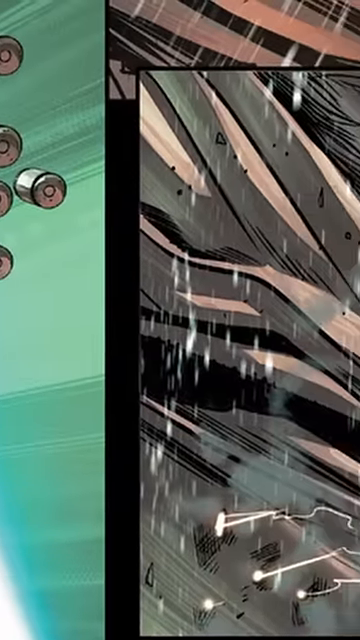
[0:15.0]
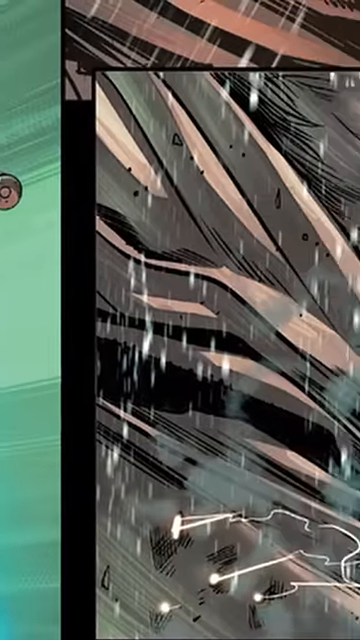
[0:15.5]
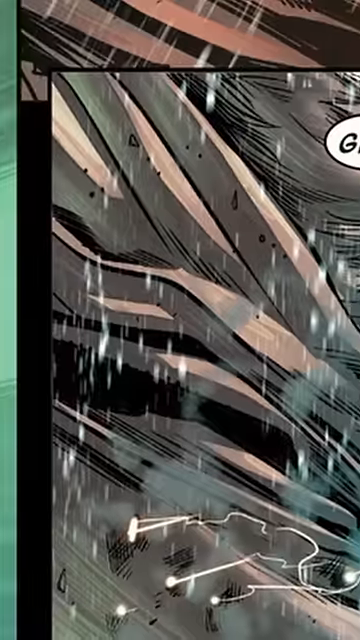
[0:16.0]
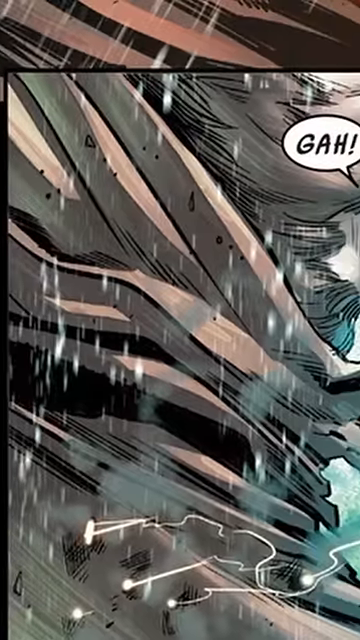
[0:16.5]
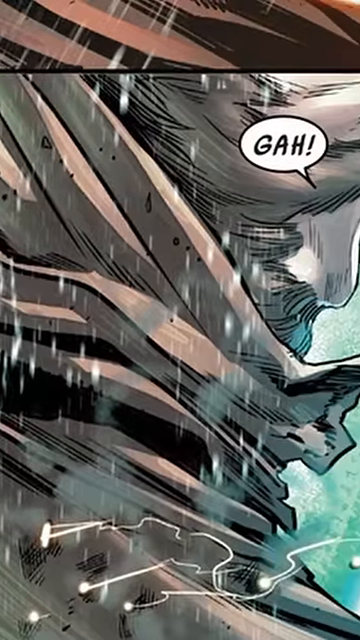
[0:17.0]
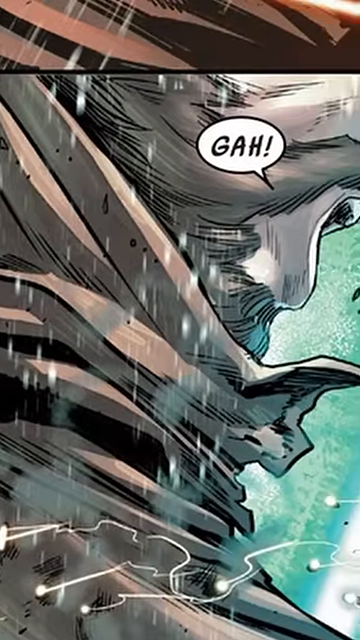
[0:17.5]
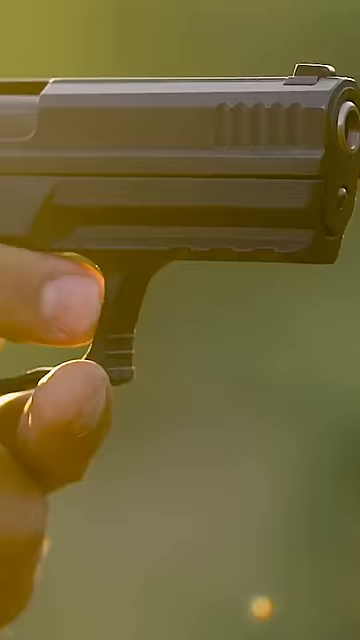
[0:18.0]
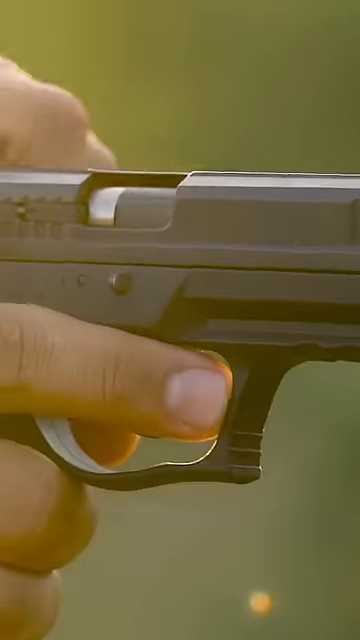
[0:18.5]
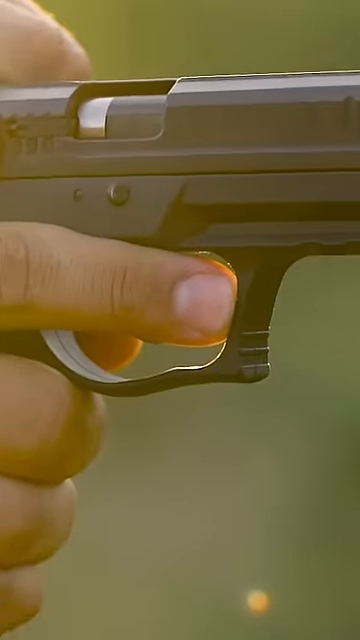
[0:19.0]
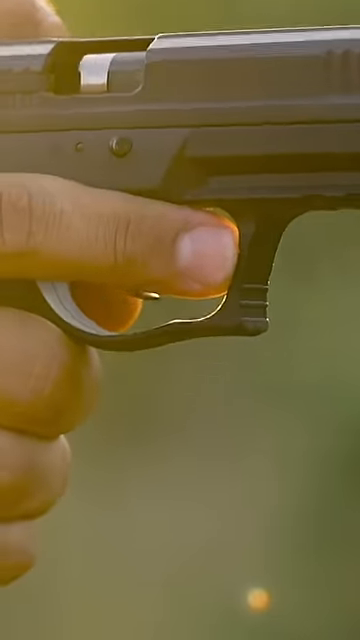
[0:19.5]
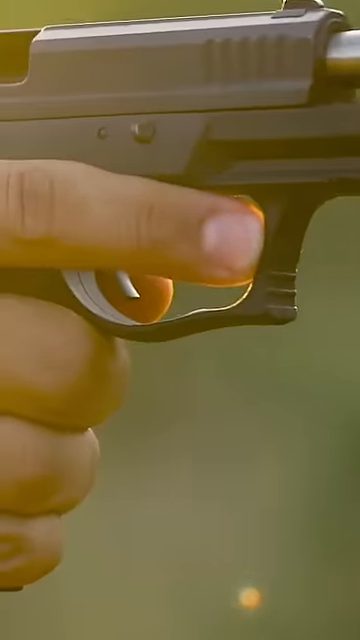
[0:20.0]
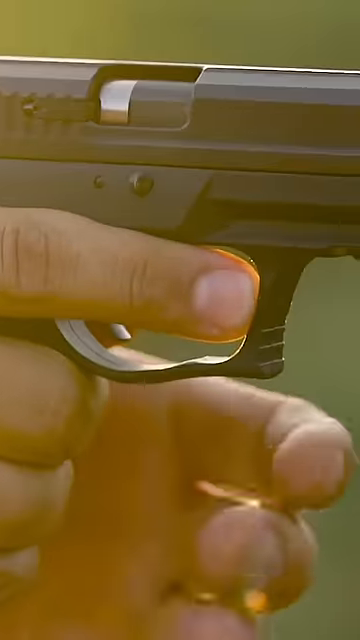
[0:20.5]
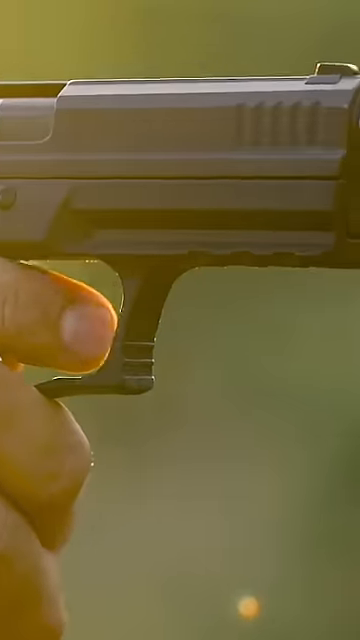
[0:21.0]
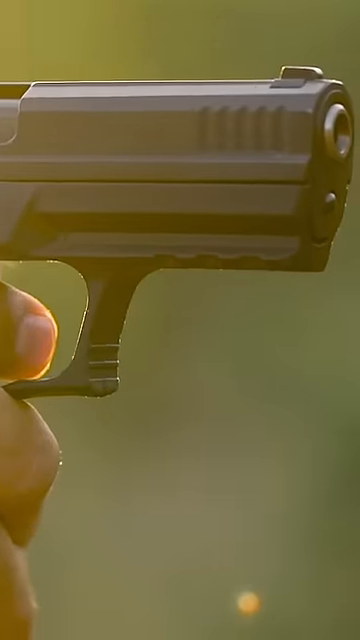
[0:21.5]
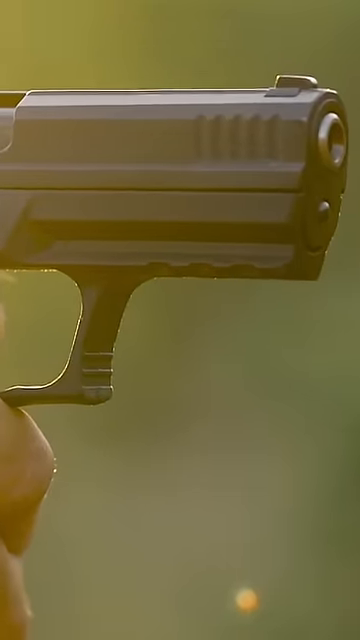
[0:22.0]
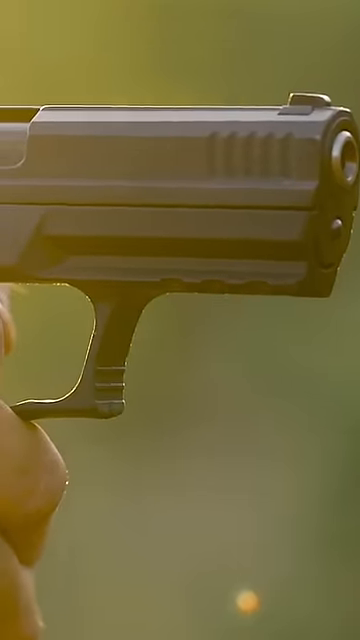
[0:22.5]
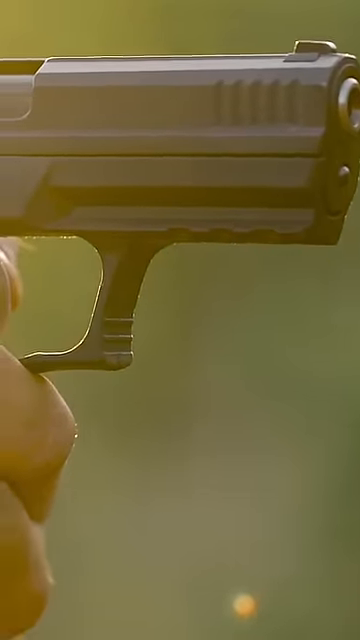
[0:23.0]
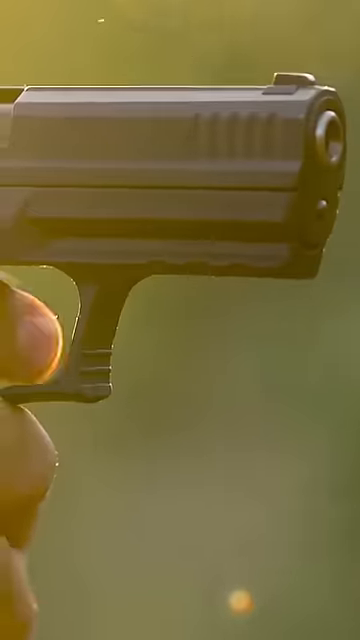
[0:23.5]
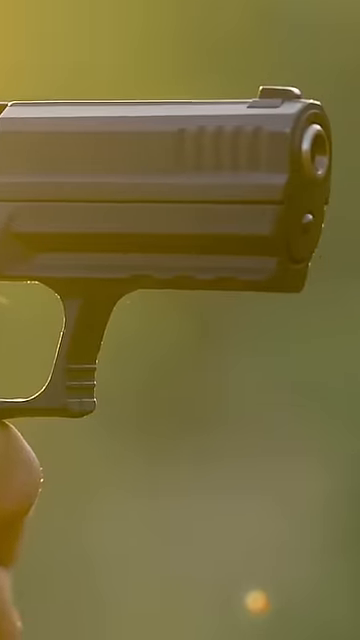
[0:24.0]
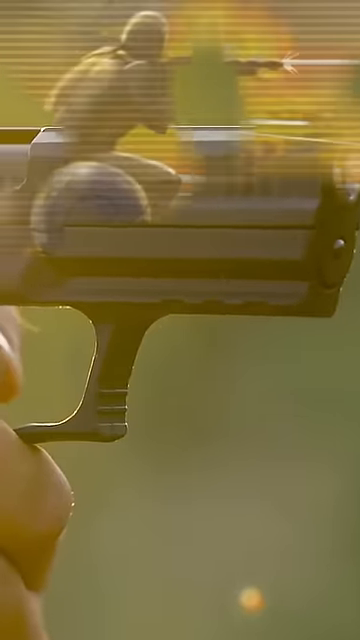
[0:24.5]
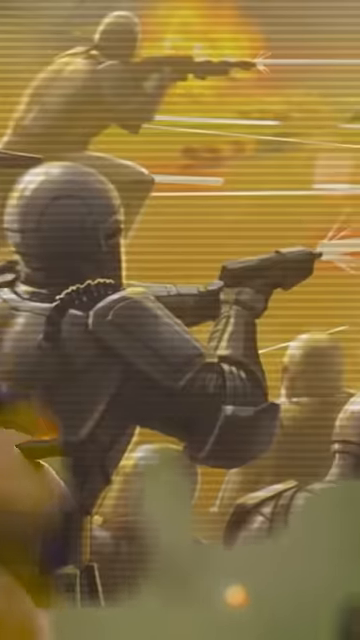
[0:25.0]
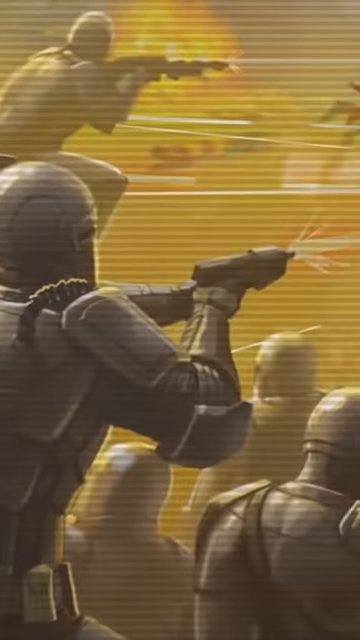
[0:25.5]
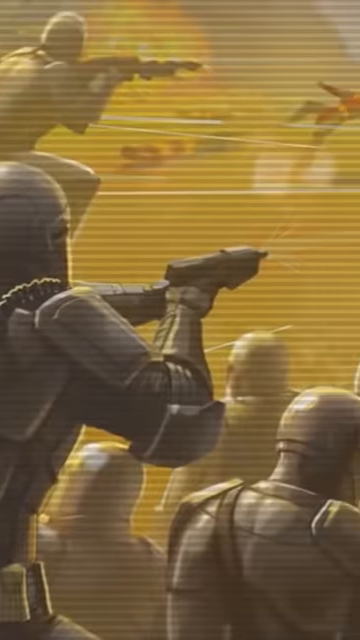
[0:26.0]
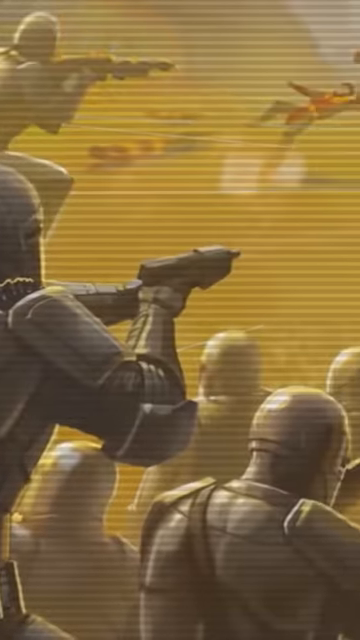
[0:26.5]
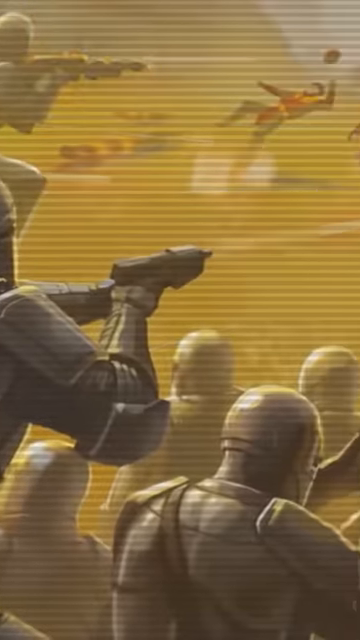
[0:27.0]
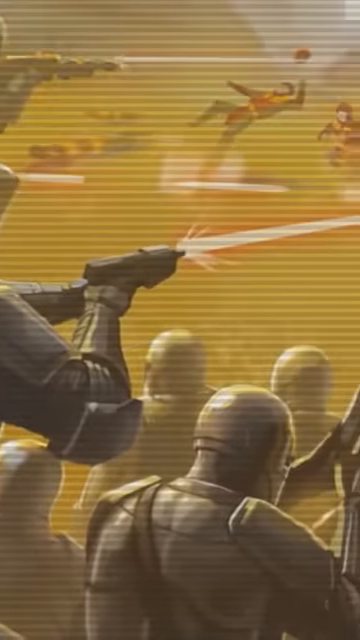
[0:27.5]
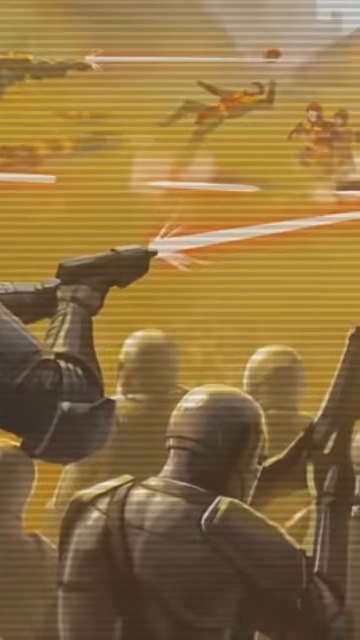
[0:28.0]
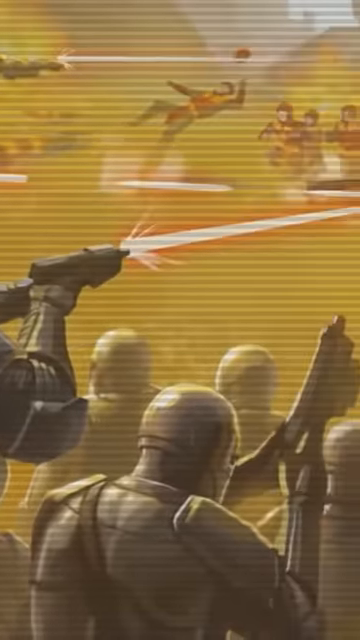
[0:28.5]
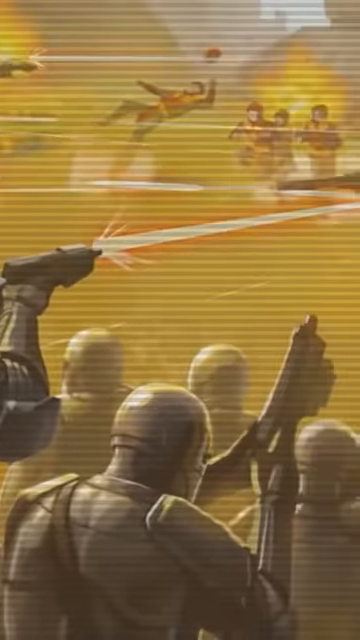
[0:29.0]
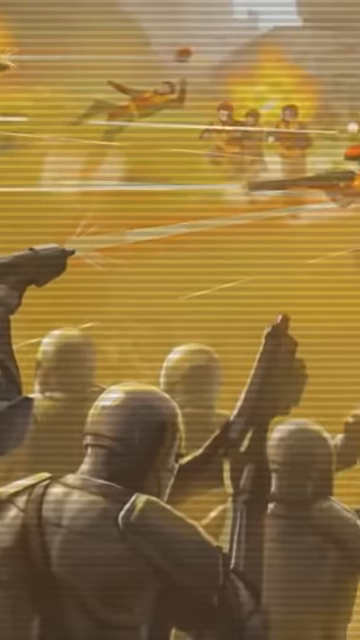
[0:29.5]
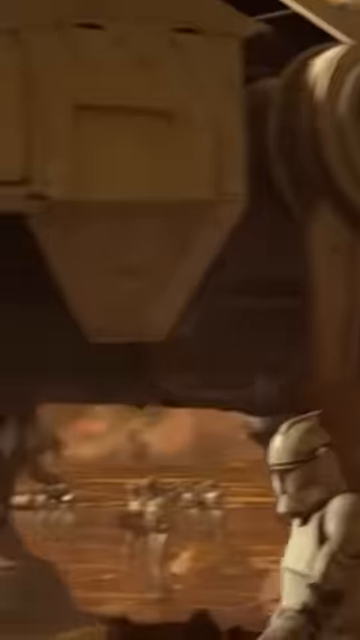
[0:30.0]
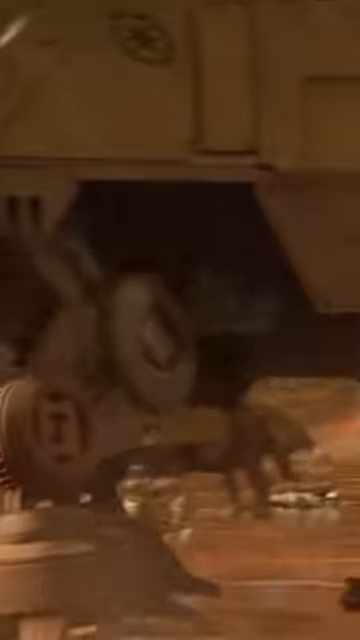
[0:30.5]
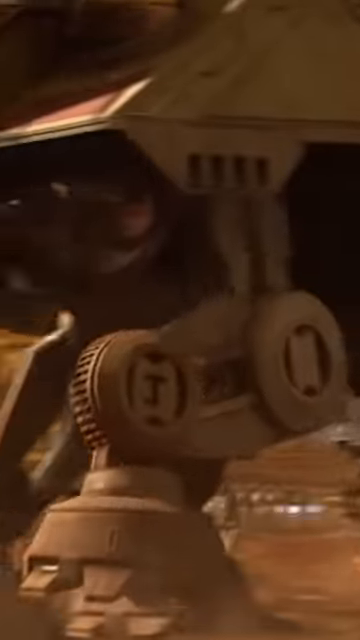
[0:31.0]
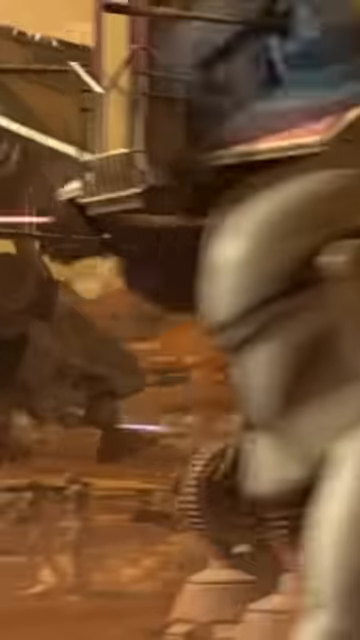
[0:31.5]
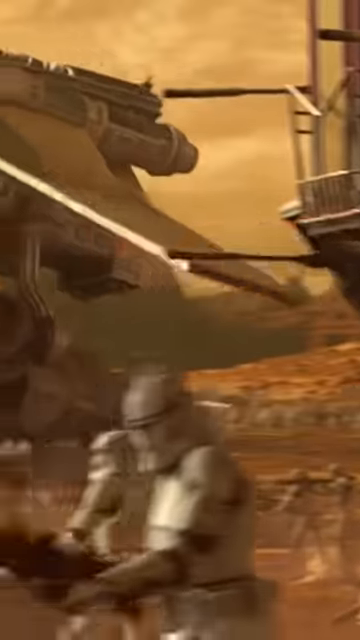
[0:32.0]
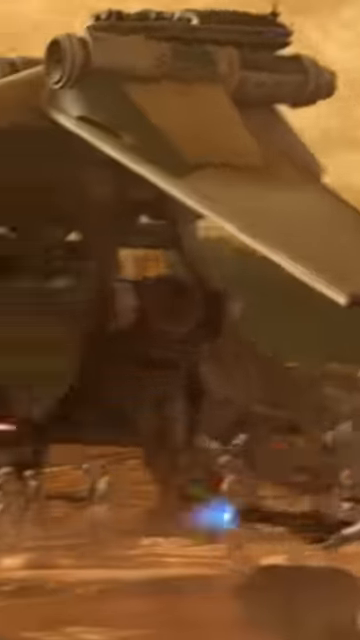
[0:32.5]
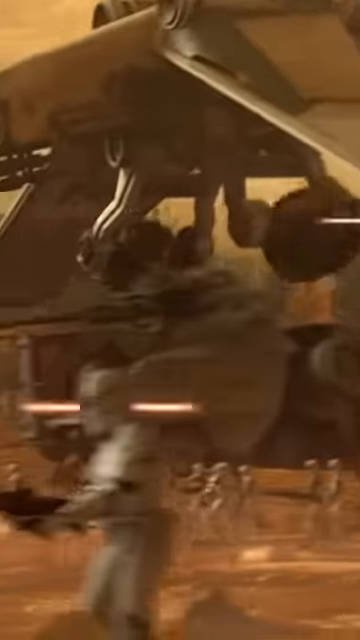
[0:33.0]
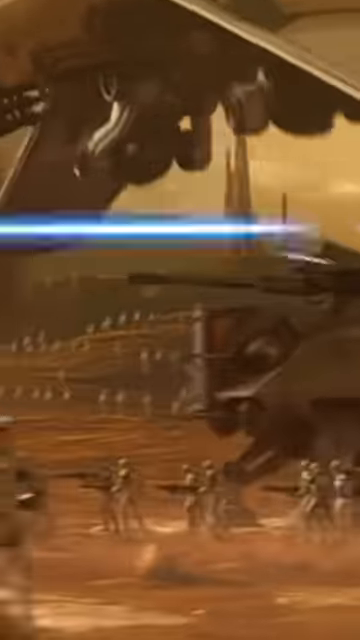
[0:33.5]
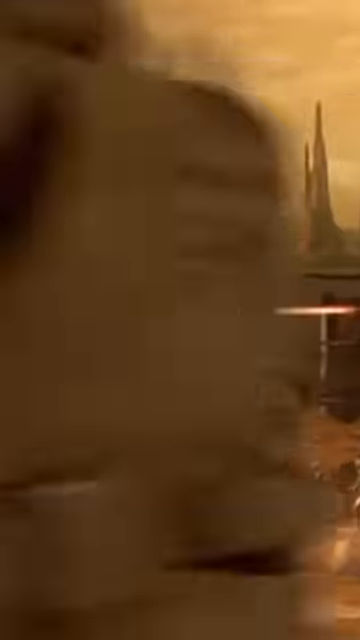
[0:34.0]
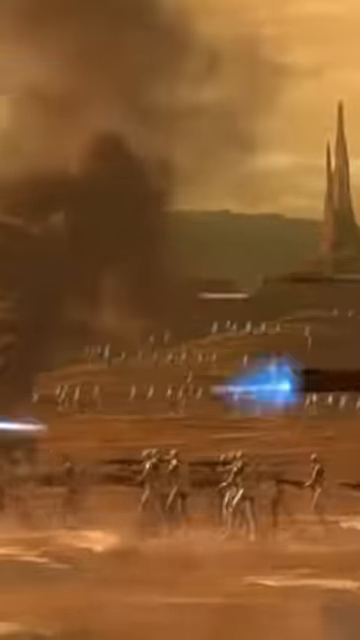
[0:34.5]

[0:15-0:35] The comic appears, with the word "Ga" on it, showing a drawing of someone getting hit by a gun. A real man properly holds a 9mm gun, pulls the trigger, and fires one shot. A cartoon animation follows, showing warriors shooting and a man battling some sort of alien spaceships. Another Star Wars excerpt then shows a whole bunch of stormtroopers who look like they are going into battle.